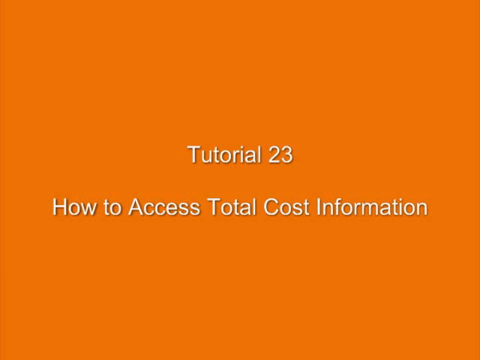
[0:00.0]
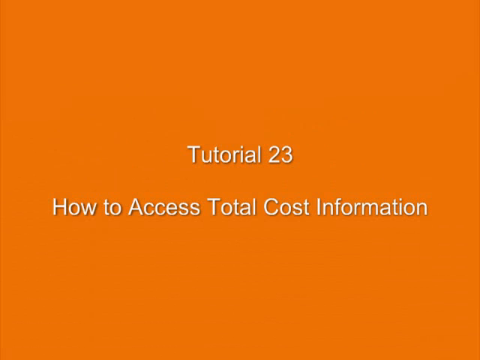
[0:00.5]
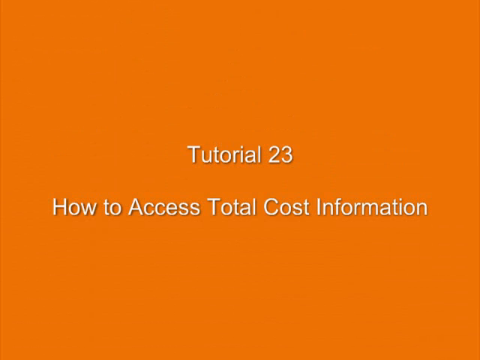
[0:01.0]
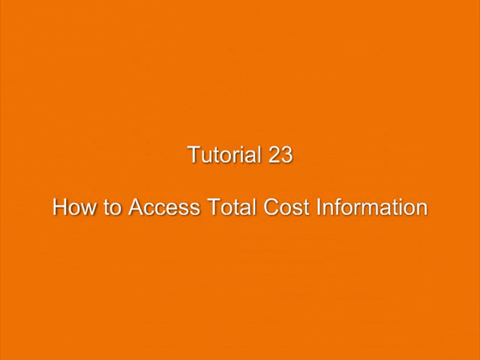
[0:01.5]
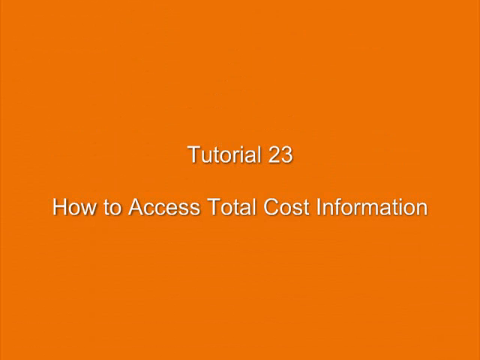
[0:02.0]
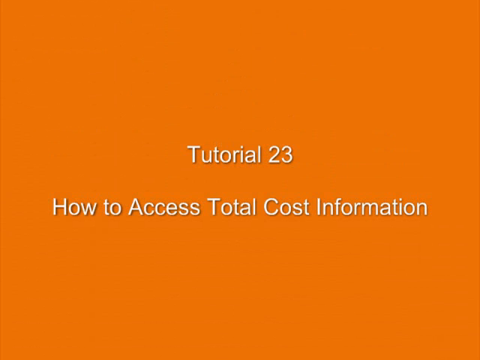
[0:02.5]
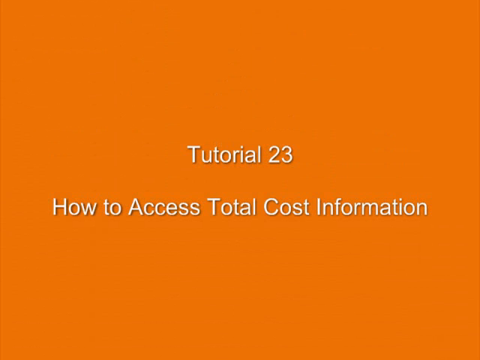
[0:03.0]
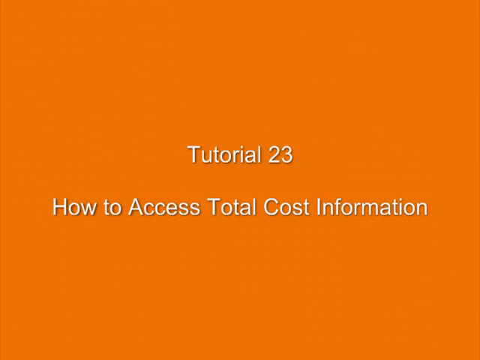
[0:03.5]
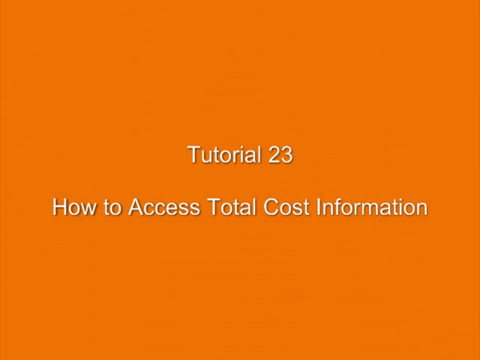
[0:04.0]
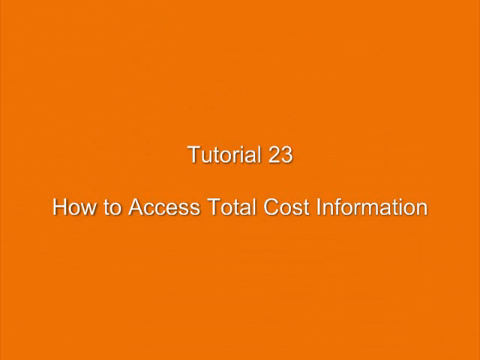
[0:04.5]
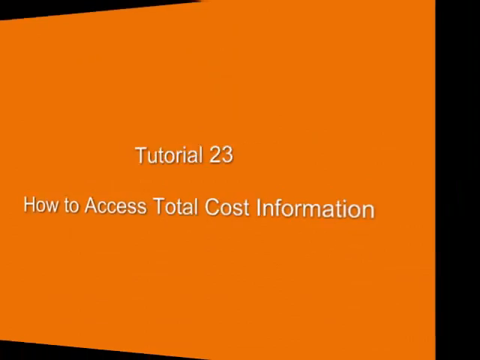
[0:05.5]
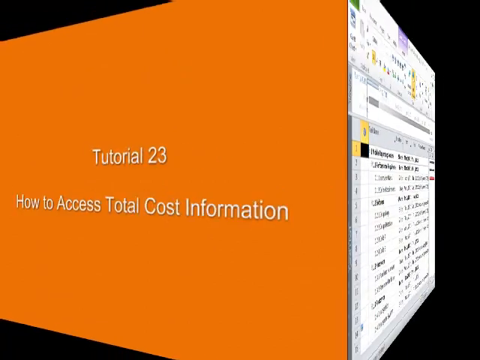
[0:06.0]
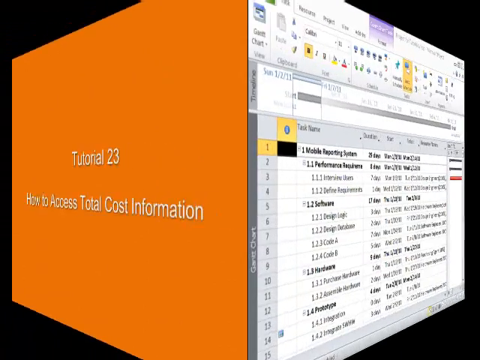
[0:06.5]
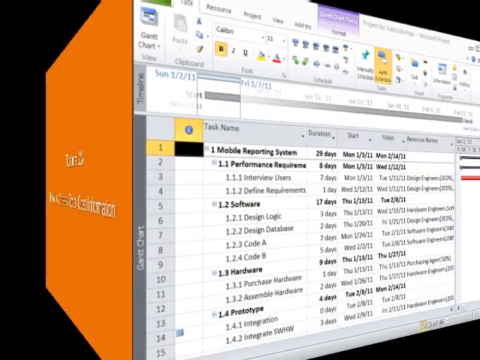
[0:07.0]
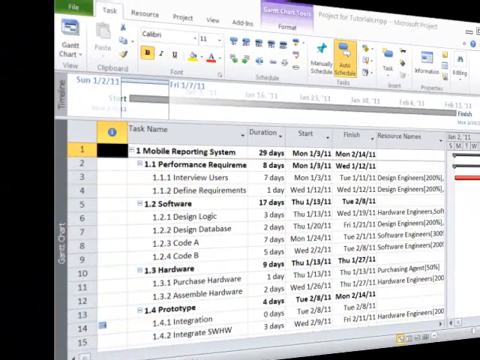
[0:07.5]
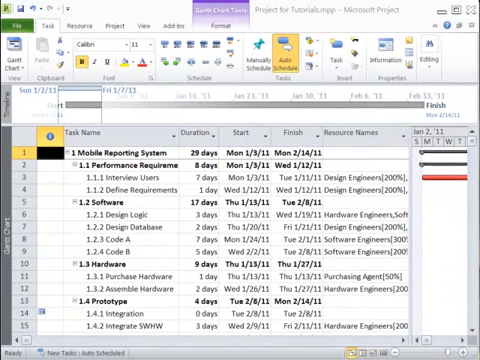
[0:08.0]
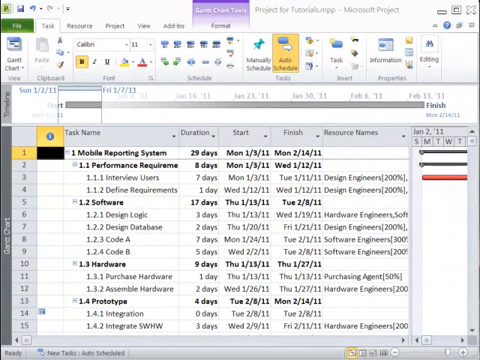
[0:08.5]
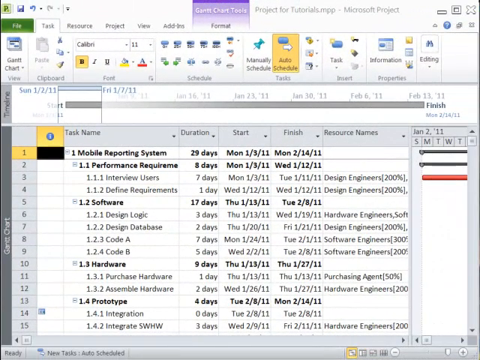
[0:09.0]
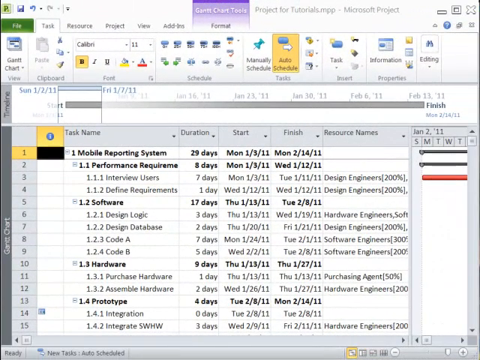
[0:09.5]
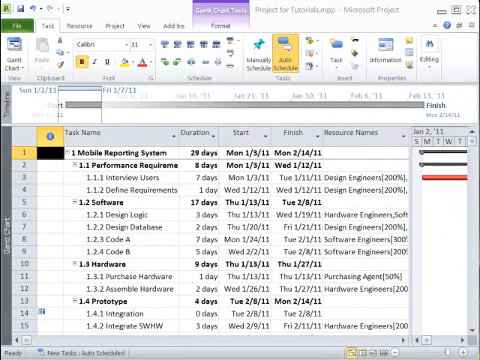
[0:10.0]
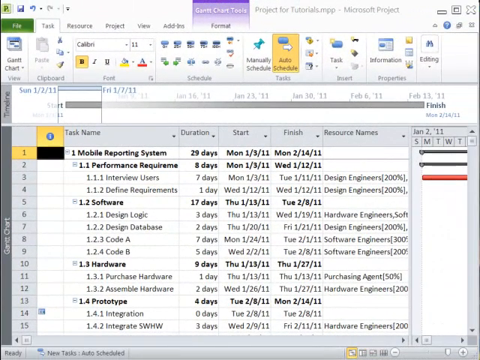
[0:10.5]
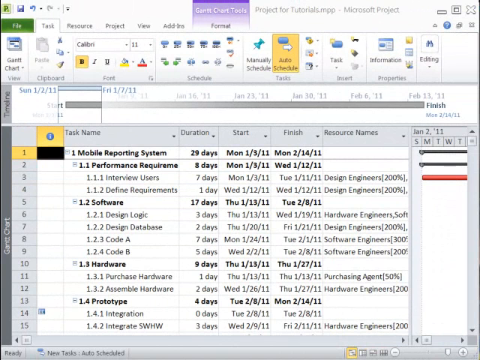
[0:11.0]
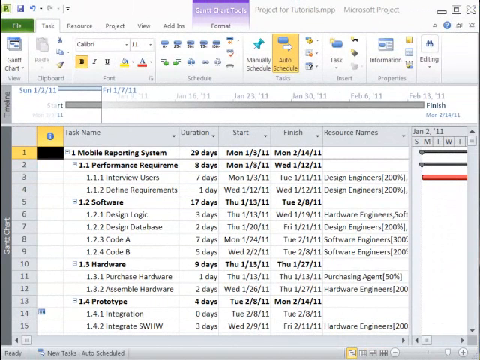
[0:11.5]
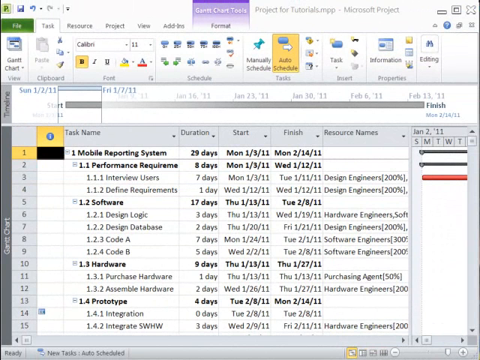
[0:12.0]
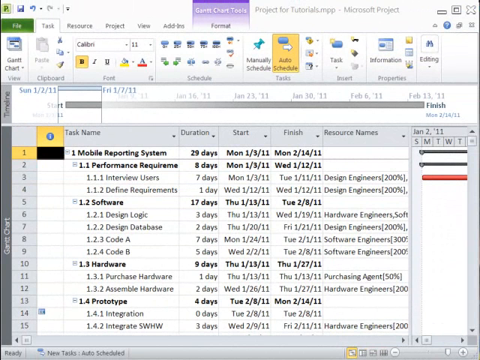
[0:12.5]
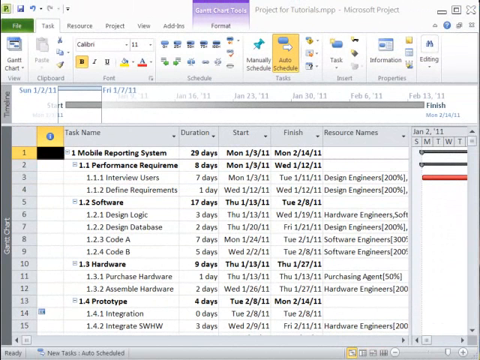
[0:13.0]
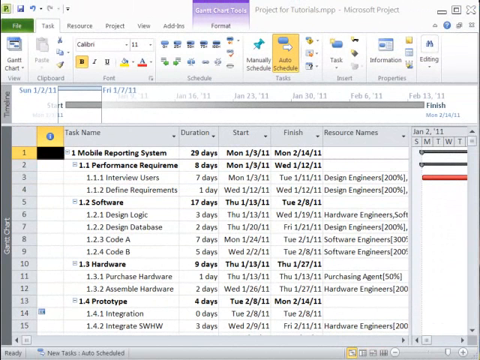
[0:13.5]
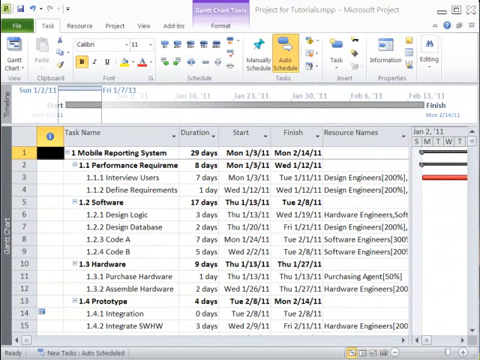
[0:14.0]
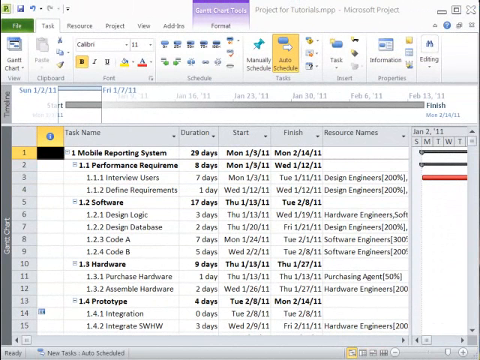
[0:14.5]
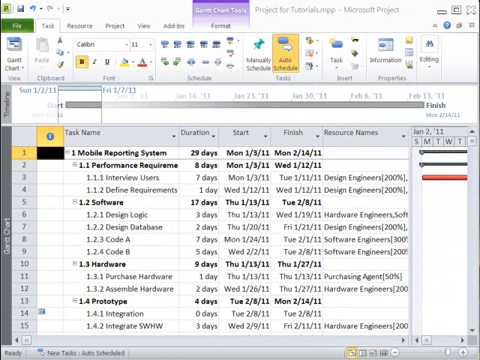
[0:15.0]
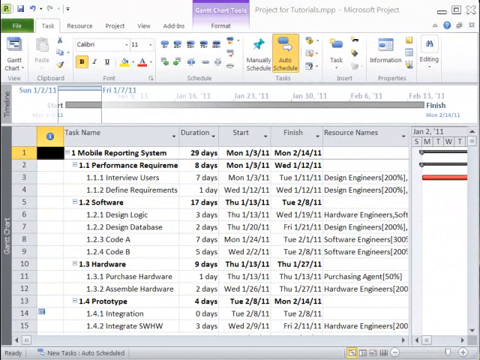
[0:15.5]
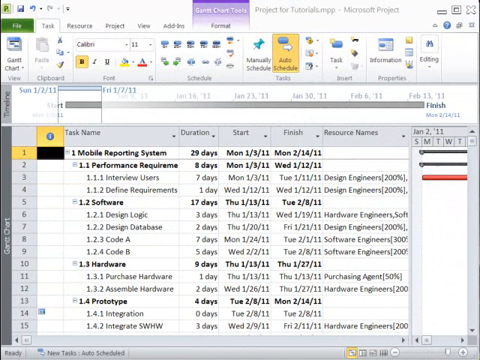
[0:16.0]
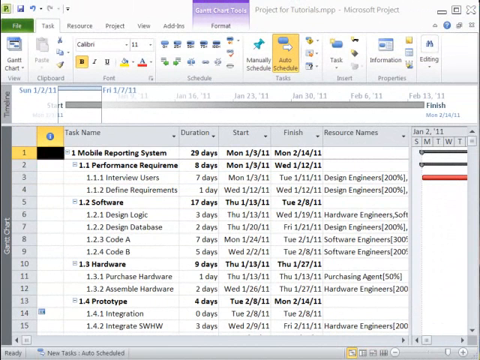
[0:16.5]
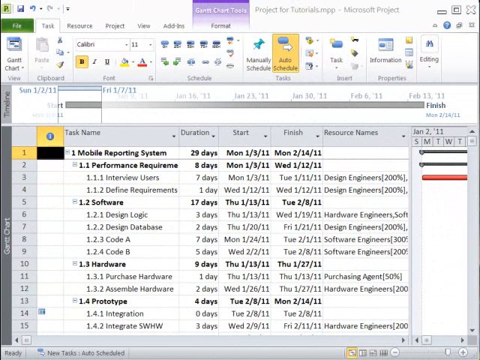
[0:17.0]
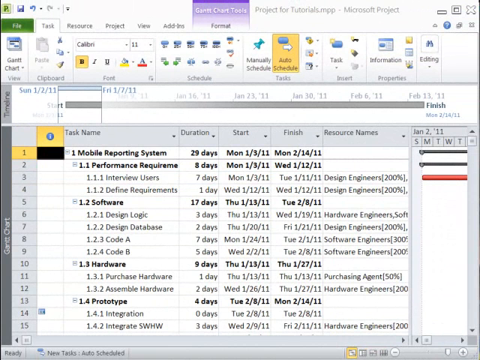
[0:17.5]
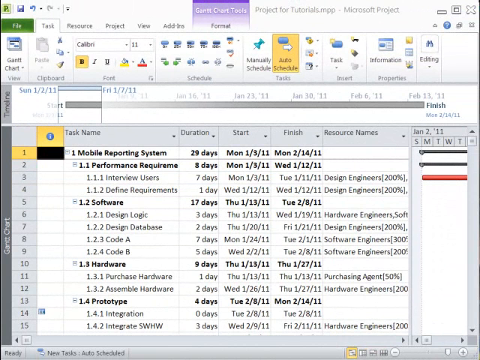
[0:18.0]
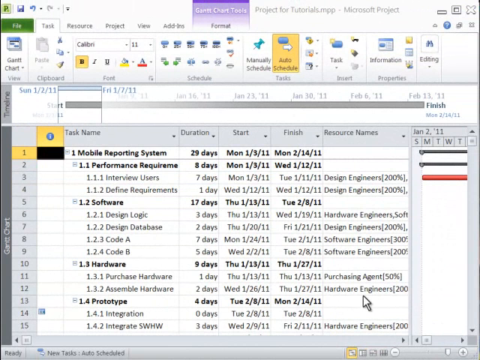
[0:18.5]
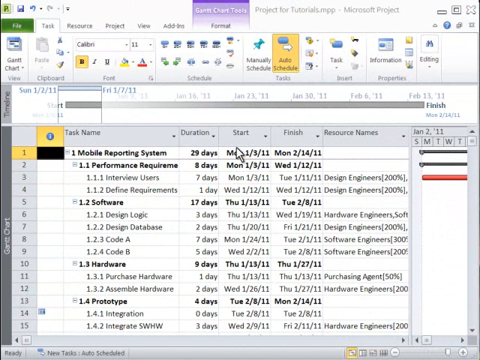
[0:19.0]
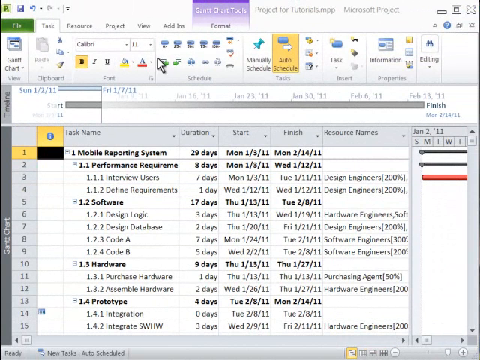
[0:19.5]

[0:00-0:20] Text on an orange background refers to tutorial 23 and reads "how to access total cost information." The video seems to have something to do with accounting. What looks like an Excel spreadsheet lists many different items, such as hardware and design. A person clicks on "view," possibly to bring something up.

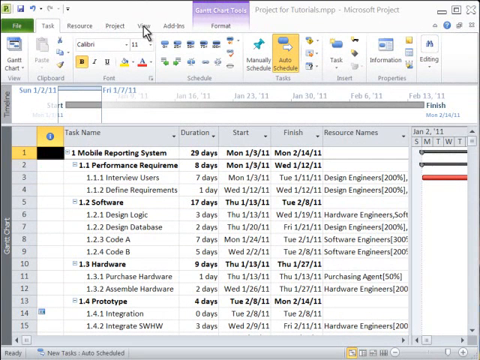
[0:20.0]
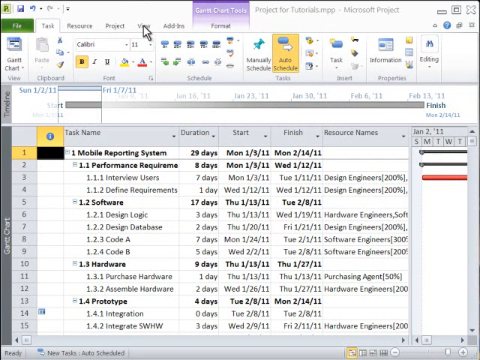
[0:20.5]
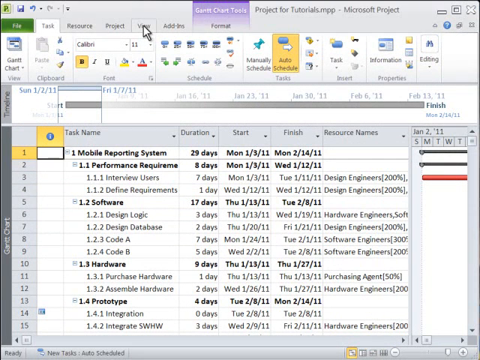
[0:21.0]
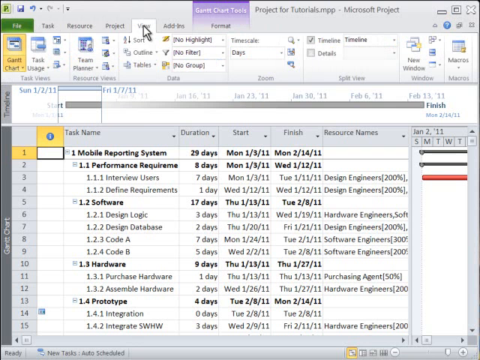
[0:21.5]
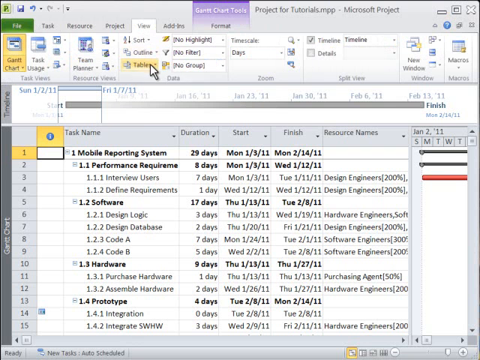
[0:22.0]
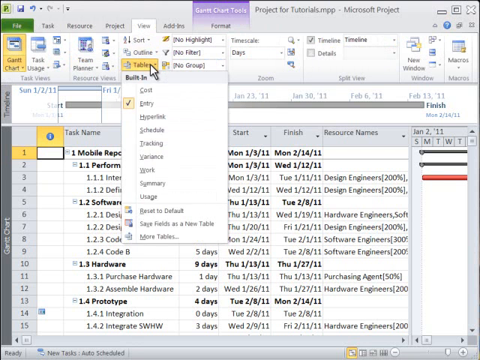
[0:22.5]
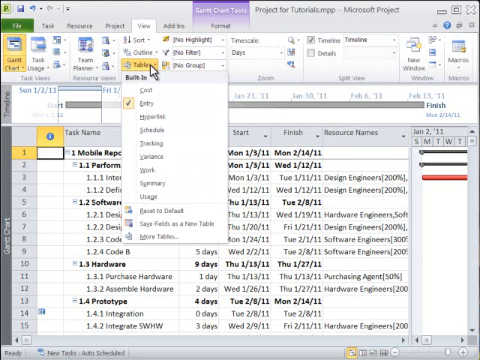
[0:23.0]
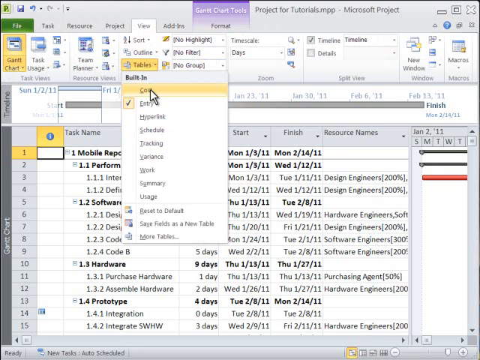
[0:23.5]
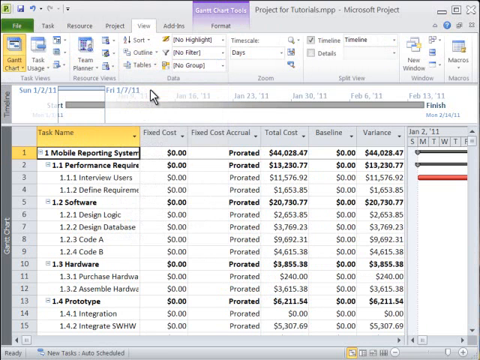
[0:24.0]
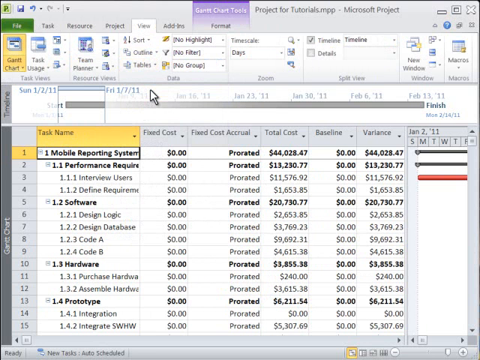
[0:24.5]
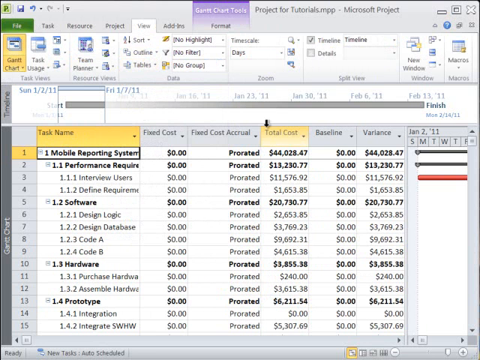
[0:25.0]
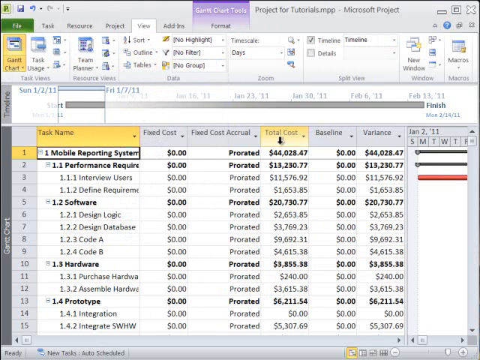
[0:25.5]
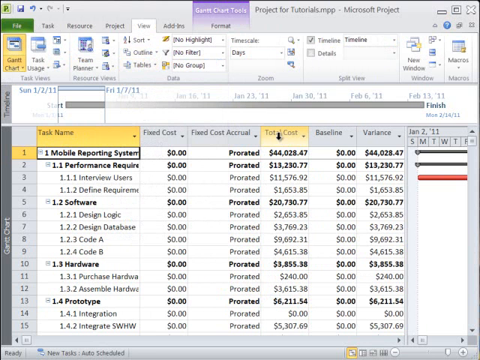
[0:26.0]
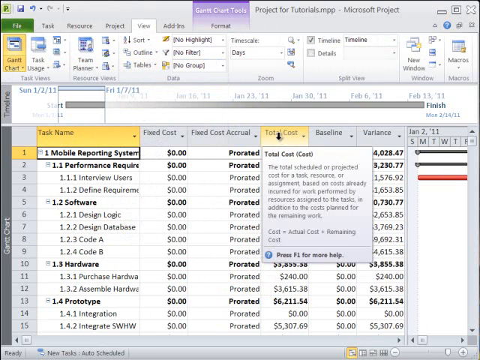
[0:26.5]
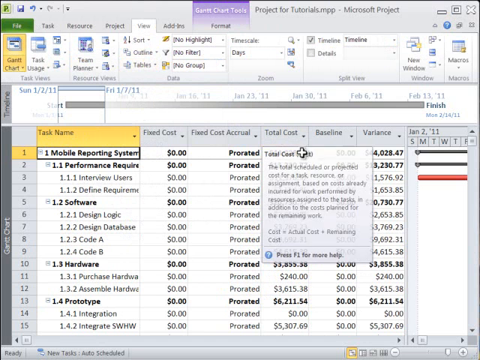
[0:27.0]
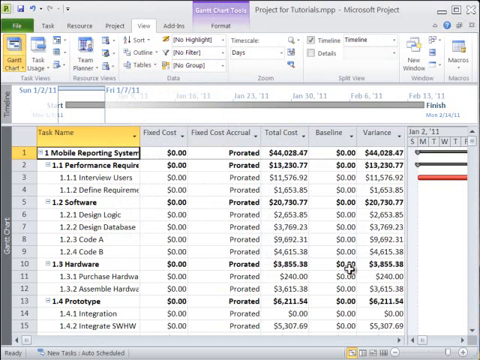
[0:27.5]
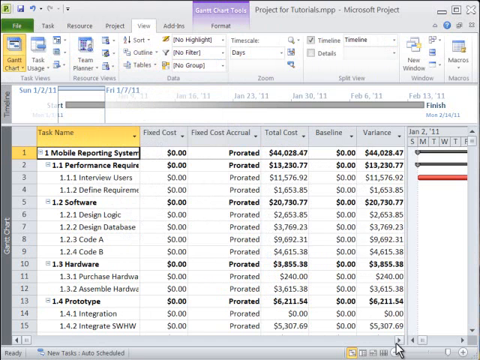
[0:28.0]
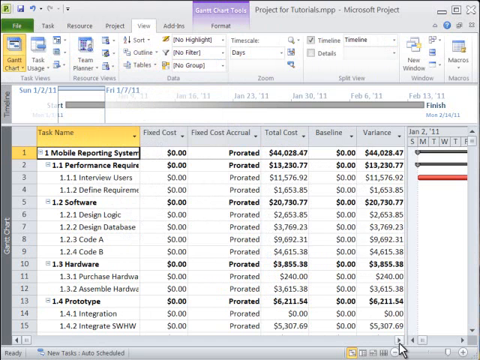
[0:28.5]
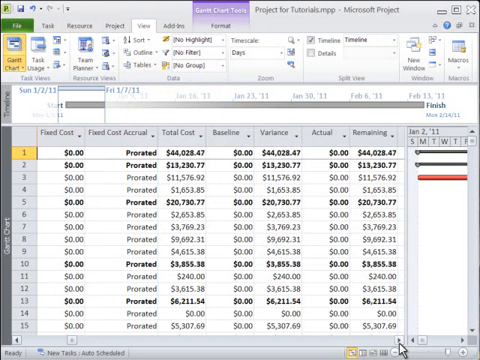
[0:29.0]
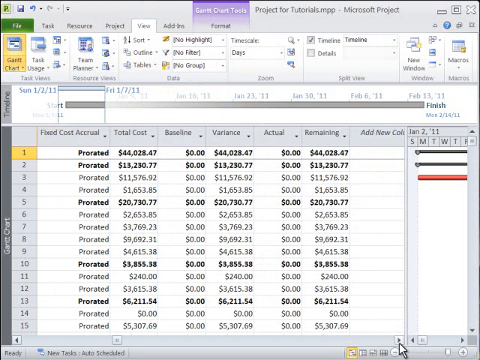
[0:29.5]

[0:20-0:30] The Excel spreadsheet is titled "mobile reporting system" and contains some dates that look like they are from 2011. It lists resources, software, hardware and a prototype. Several columns are full of numbers. Someone appears to be viewing certain things in the sheet. "Design database" is visible, and there are some percentages listed under resource names. A duration column appears, with many different numbers for different days.